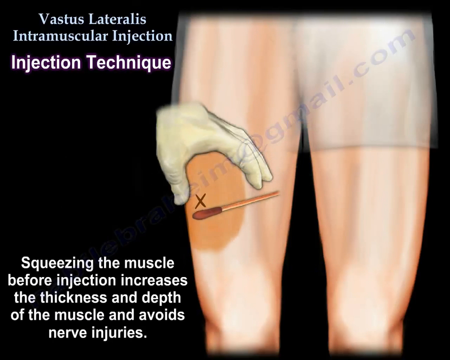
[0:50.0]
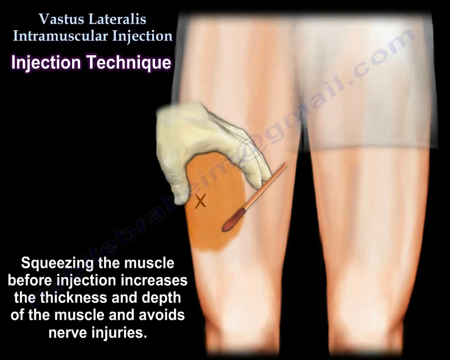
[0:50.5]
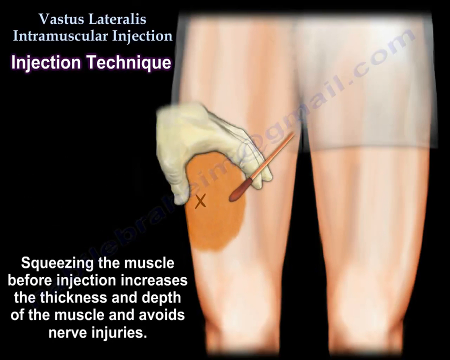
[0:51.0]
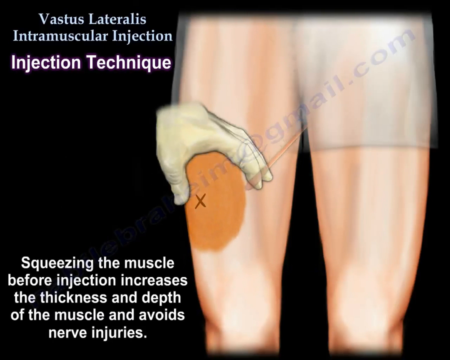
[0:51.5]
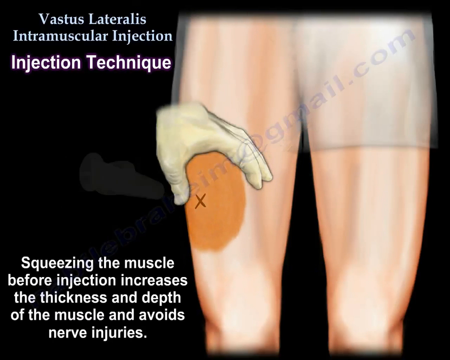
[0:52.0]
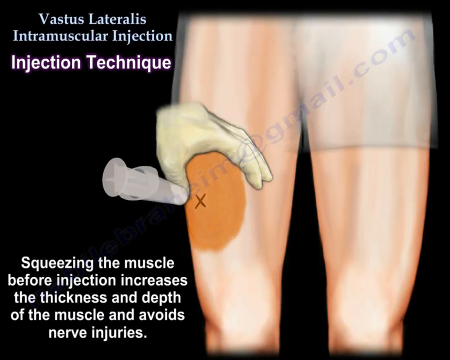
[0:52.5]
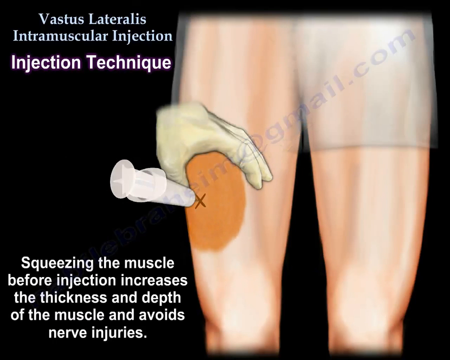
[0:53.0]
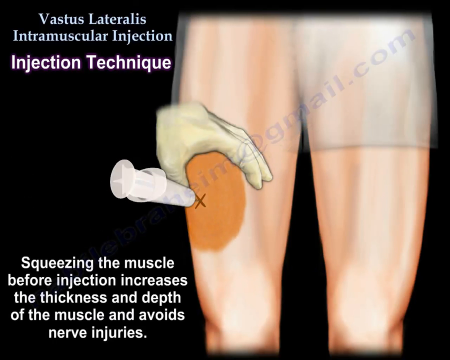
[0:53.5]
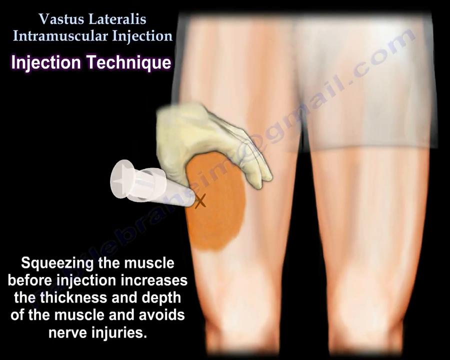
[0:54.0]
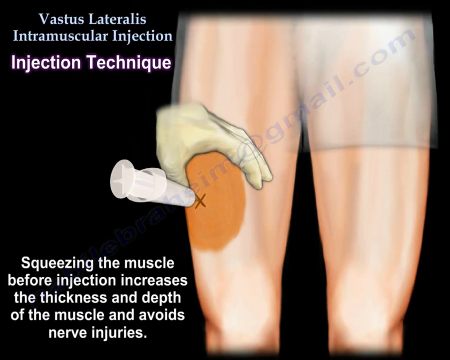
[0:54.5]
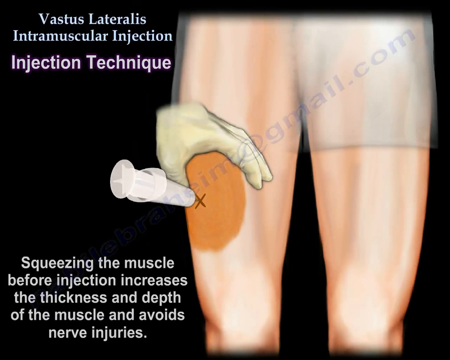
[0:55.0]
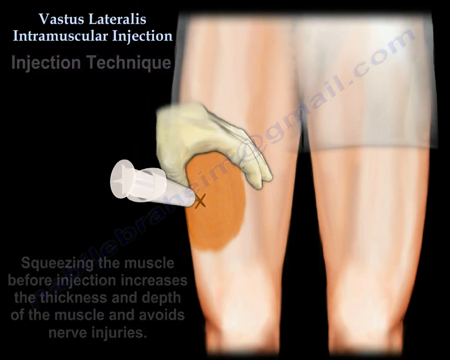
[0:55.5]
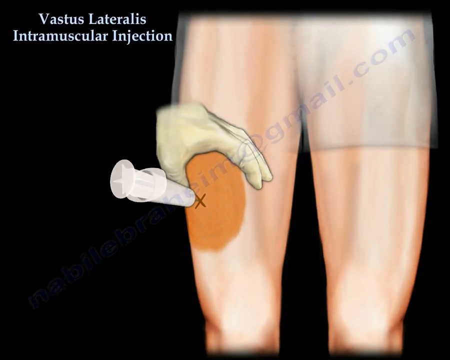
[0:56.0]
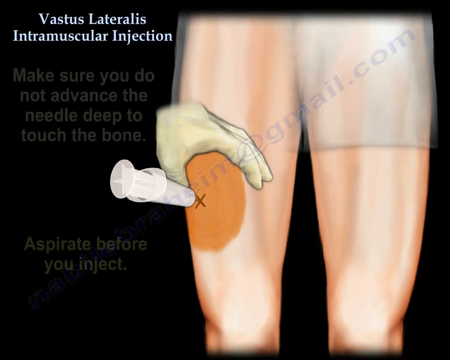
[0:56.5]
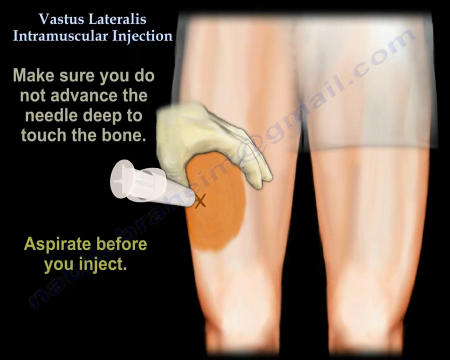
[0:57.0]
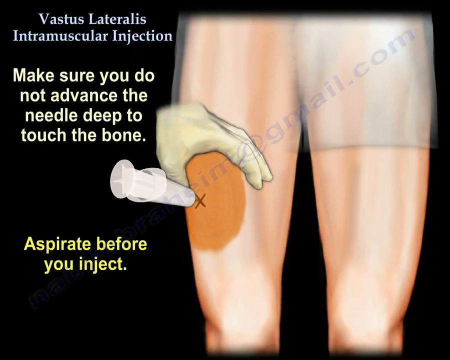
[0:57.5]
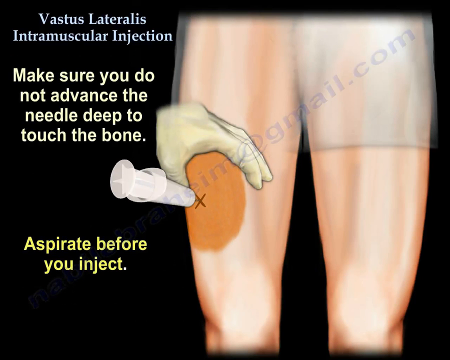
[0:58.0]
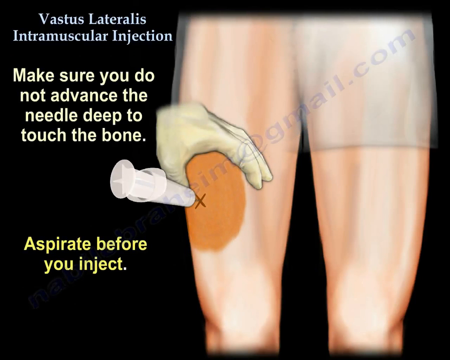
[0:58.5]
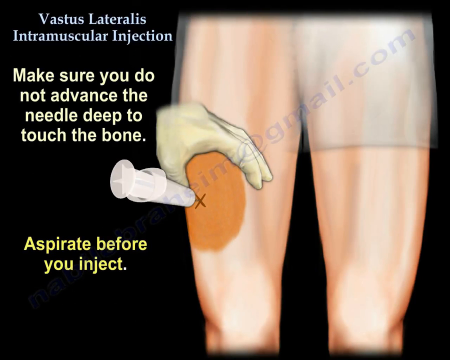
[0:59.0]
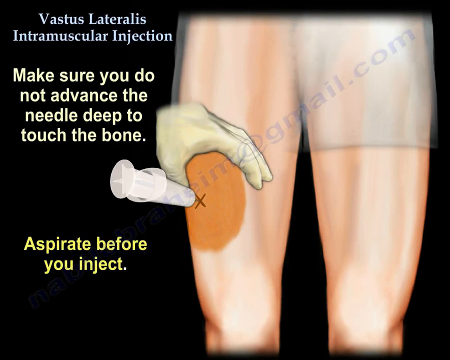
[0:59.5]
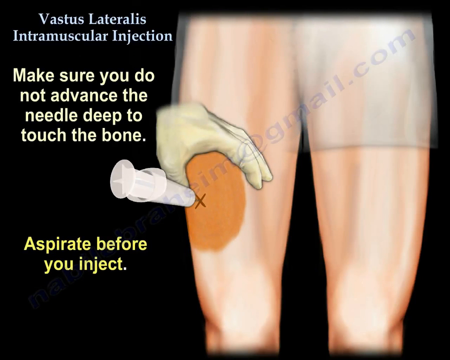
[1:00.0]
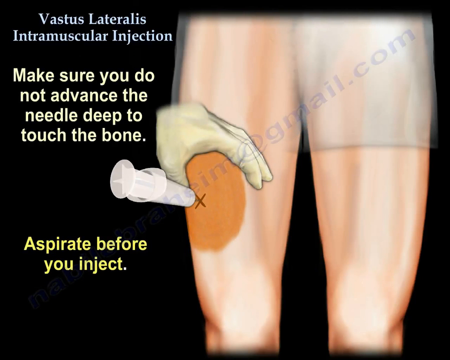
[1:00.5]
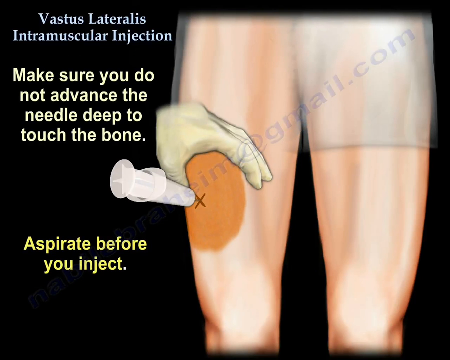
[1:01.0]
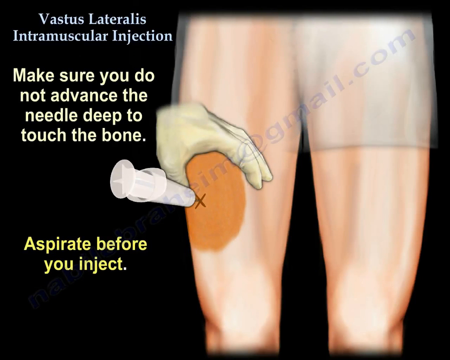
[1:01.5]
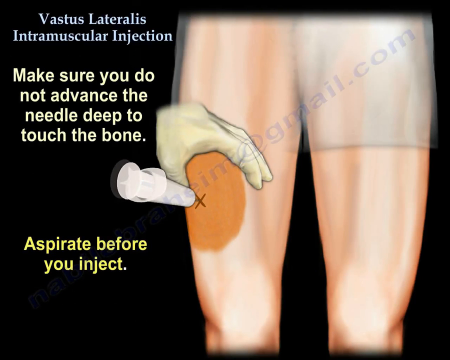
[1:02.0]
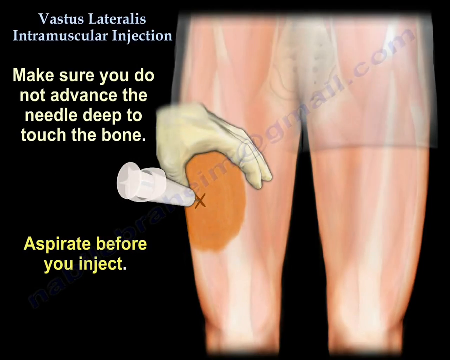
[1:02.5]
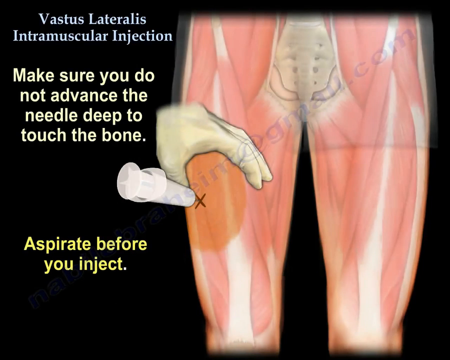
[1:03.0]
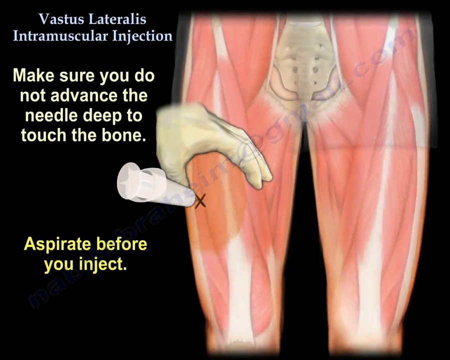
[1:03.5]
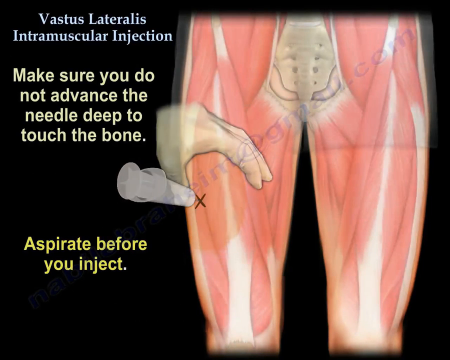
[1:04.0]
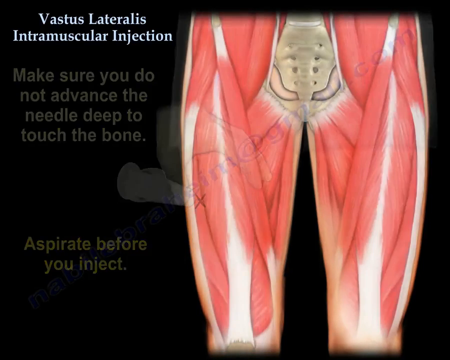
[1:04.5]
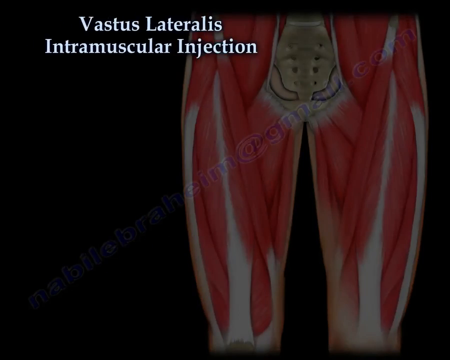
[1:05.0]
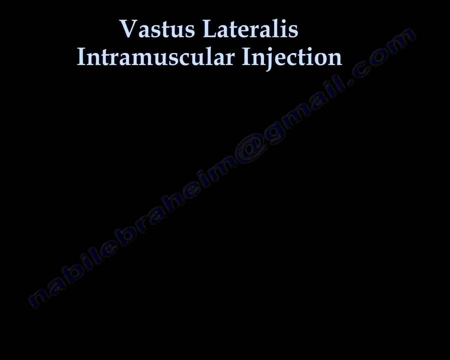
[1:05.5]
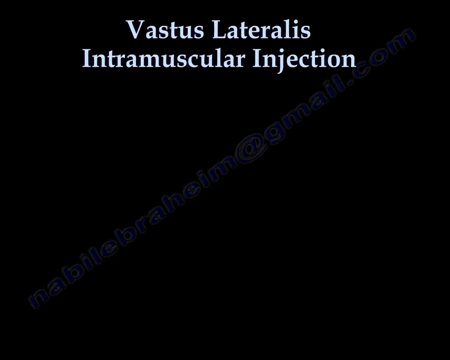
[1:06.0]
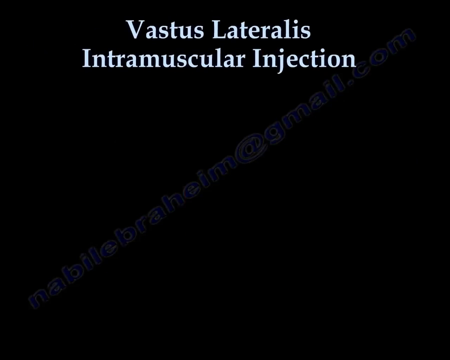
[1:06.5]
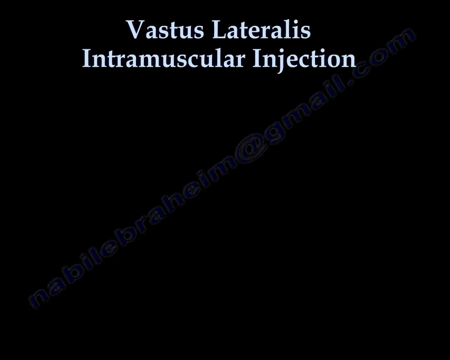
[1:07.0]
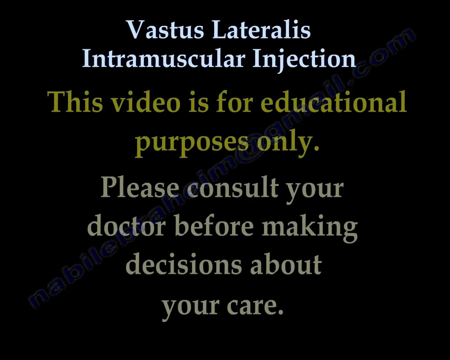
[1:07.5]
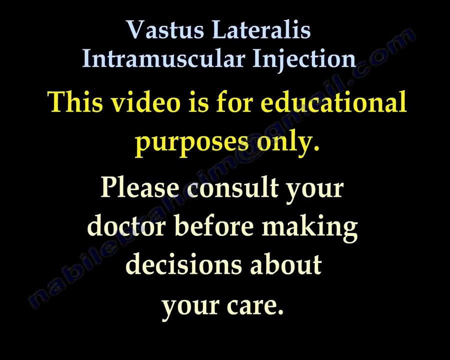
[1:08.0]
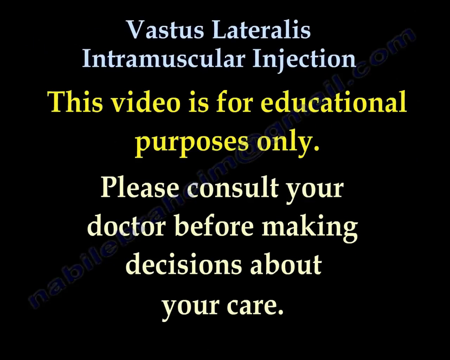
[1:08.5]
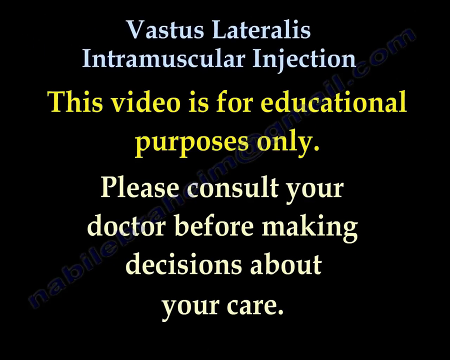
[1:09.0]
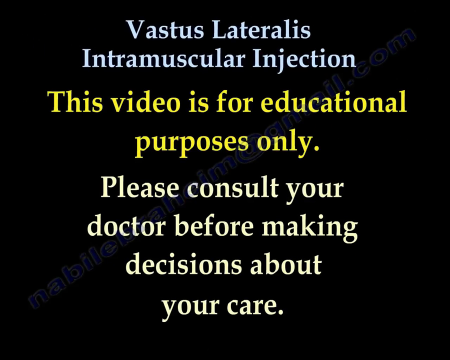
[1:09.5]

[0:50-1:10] The presentation of the injection technique continues. A gloved white hand slowly applies what looks to be some sort of iodine liquid on the vastus lateralis muscle. An animated syringe then moves toward a small X painted on the muscle. Text in the bottom left corner reads "squeezing the muscle before injection increases the thickness and depth of the muscle and avoids nerve injuries". The text then changes to "make sure you do not advance the needle deep to touch the bone", and below that "aspirate before you inject". The body then switches back to a muscular view of itself without skin before going back to a title card reading "vastus lateralis intramuscular injection". After that, text reads "this video is for educational purposes only. Please consult your doctor before making decisions about your care."